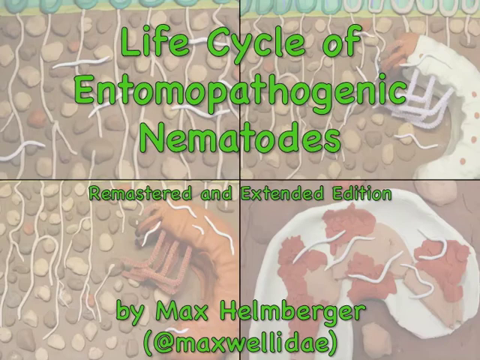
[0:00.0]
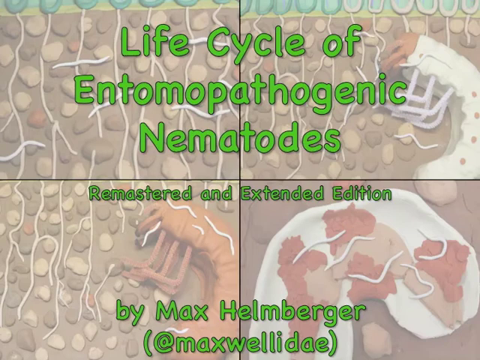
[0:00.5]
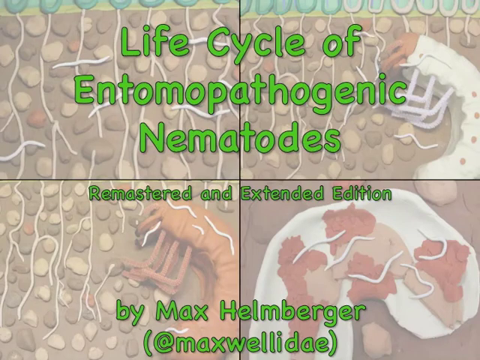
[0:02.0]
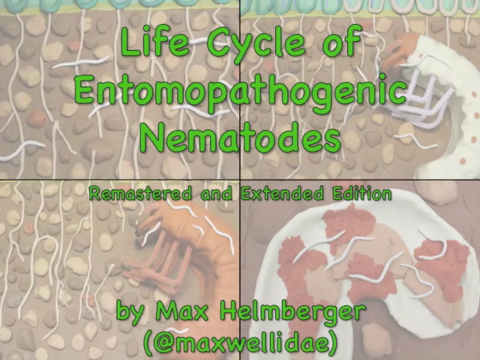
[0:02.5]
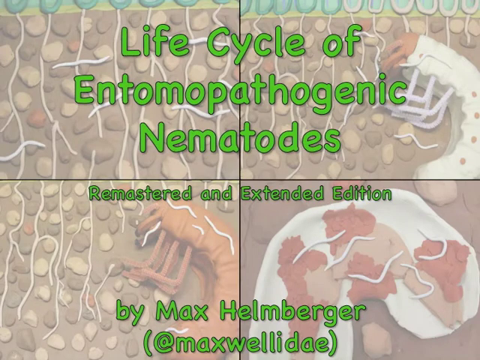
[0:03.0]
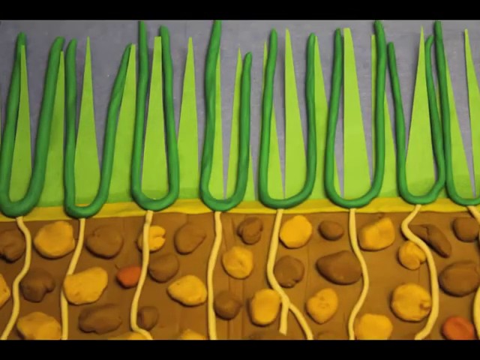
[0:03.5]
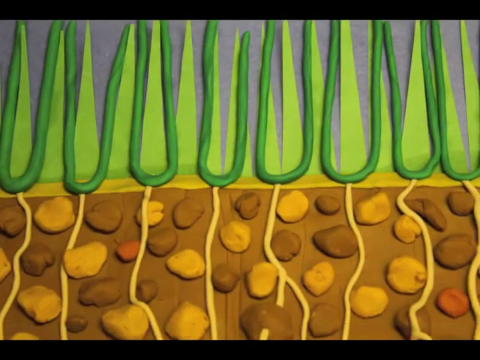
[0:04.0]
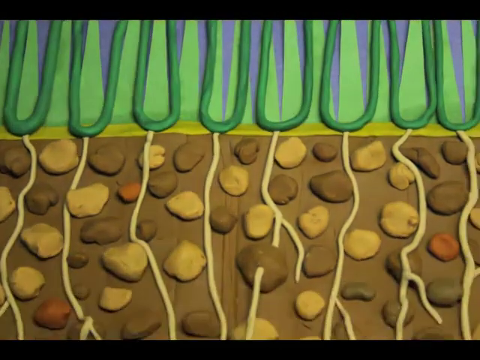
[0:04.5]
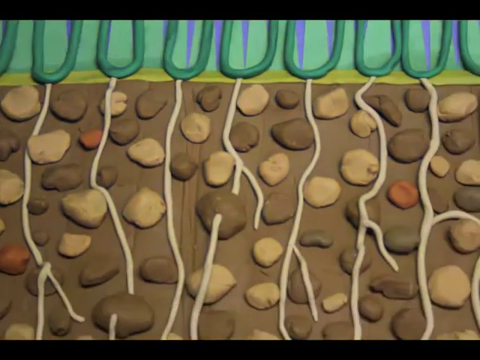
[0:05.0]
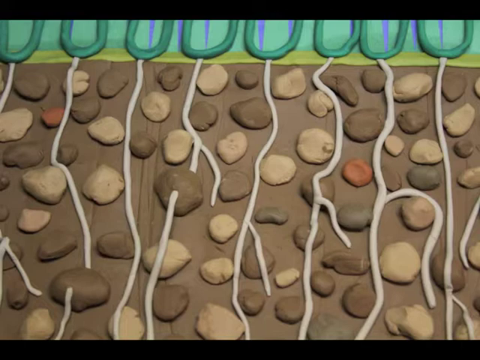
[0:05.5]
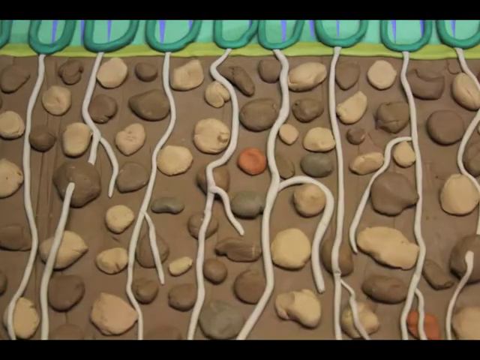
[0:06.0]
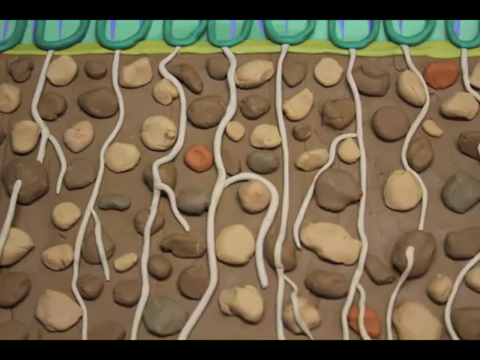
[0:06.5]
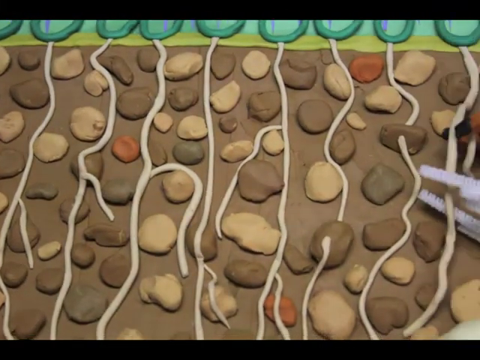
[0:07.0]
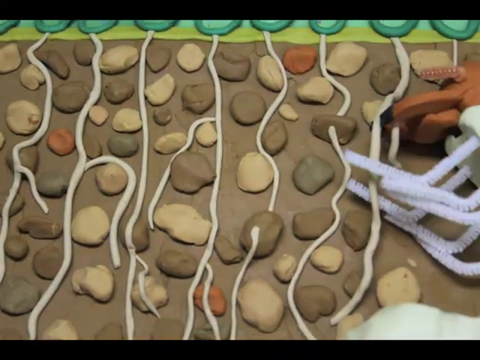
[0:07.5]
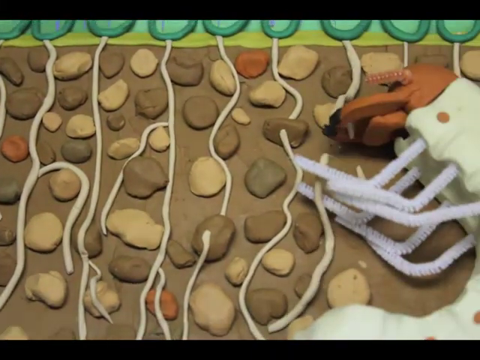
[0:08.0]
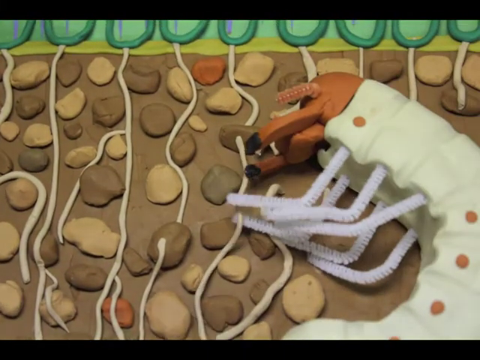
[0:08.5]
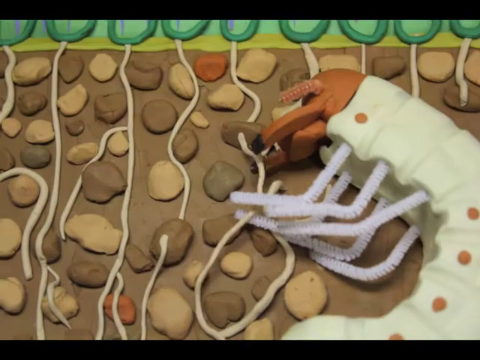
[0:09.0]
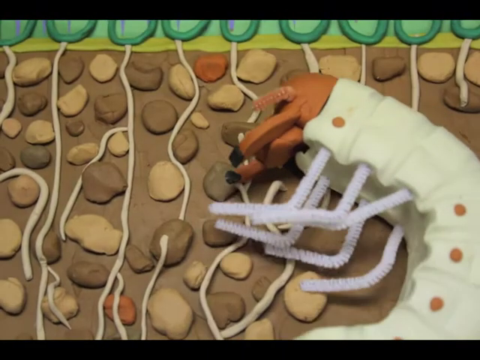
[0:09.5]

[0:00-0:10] Bright green text in the middle of the screen reads "life cycle of entomopathogenic nematodes remastered and extended edition by Max Helmberger". In the background are four drawings, supposedly of nematodes, in four various stages of their life. The video is a clay animation. It begins with what seems to be grass, plants with roots grown into the ground, and soil with various elements in it. The camera then shows a larva in the soil; it is white mixed with orange, and it chews through the roots of the plants.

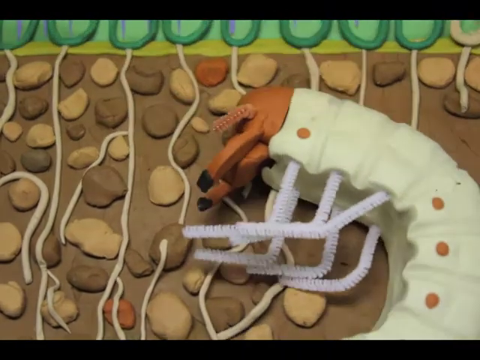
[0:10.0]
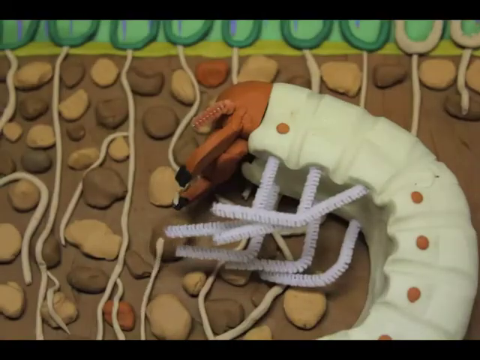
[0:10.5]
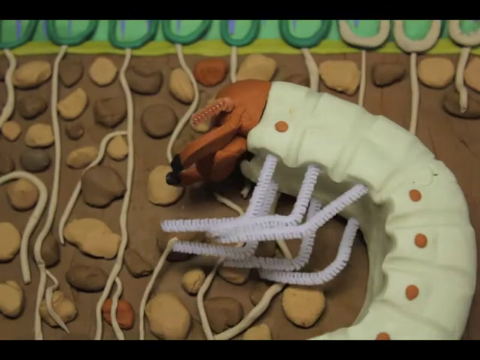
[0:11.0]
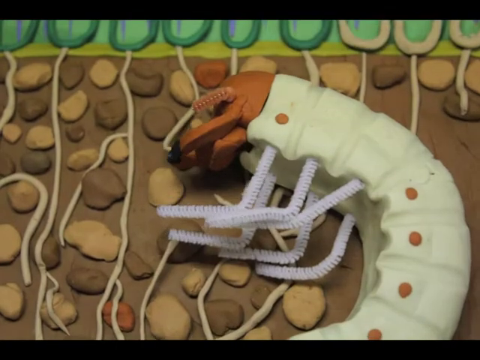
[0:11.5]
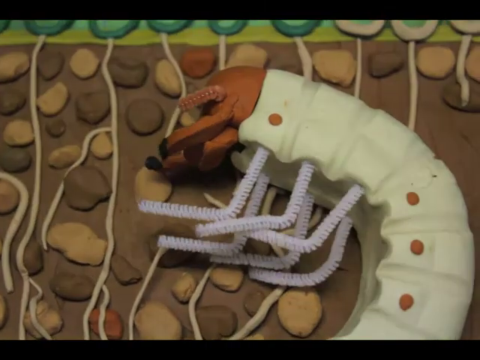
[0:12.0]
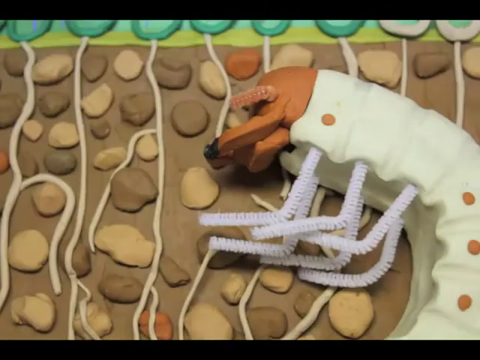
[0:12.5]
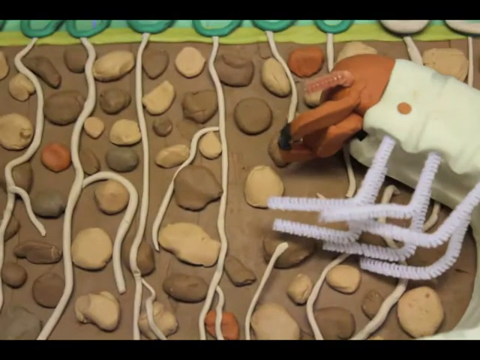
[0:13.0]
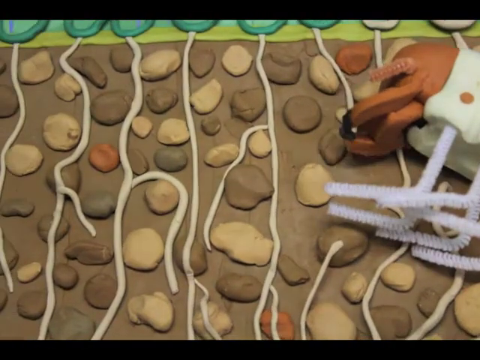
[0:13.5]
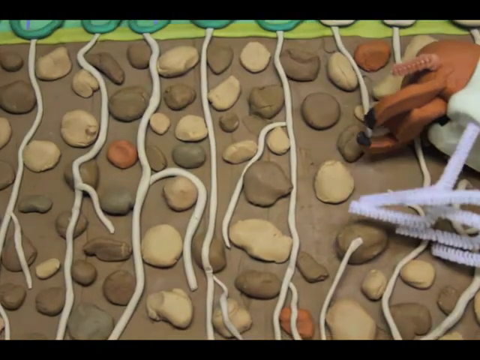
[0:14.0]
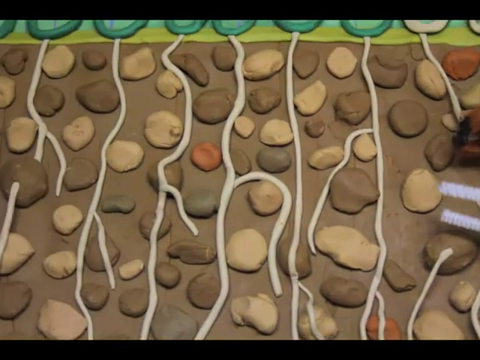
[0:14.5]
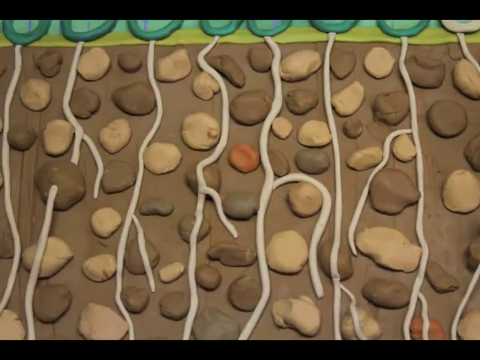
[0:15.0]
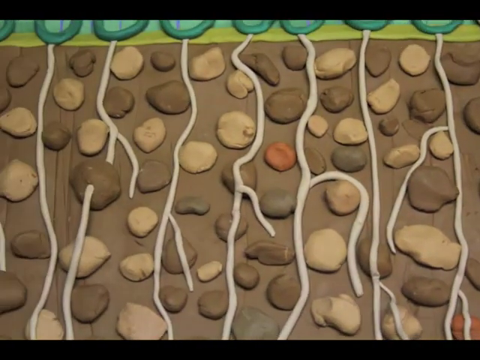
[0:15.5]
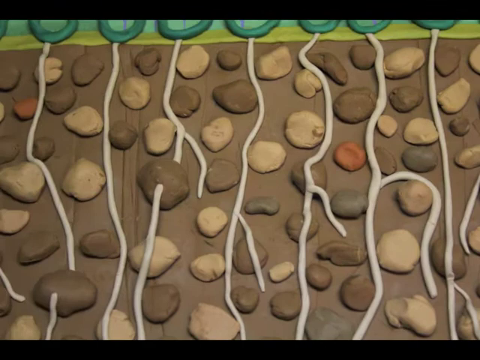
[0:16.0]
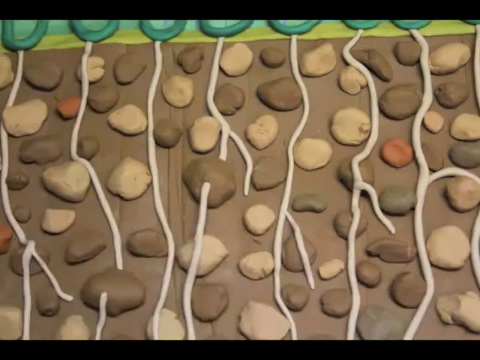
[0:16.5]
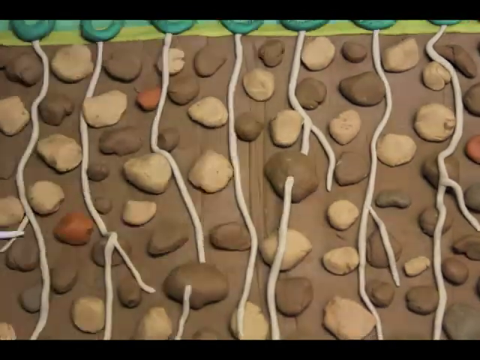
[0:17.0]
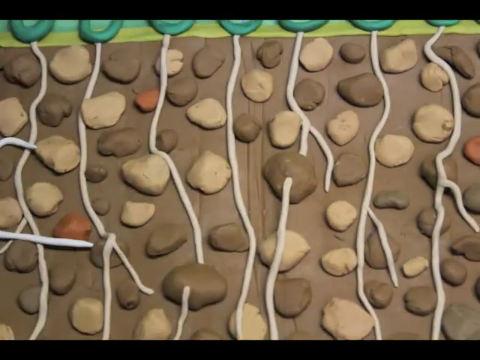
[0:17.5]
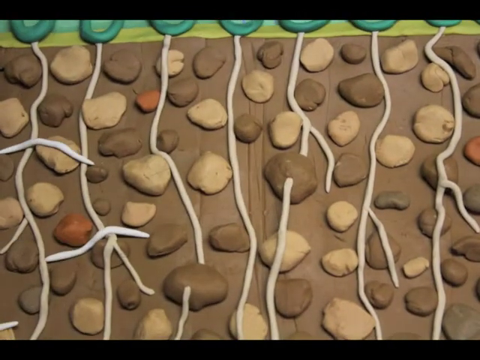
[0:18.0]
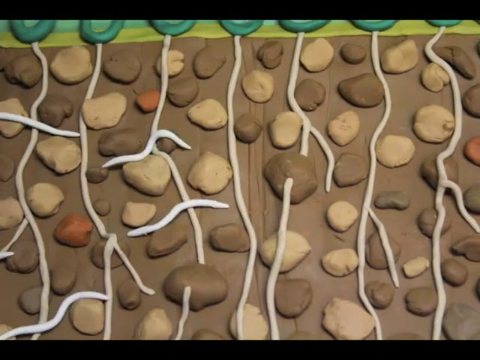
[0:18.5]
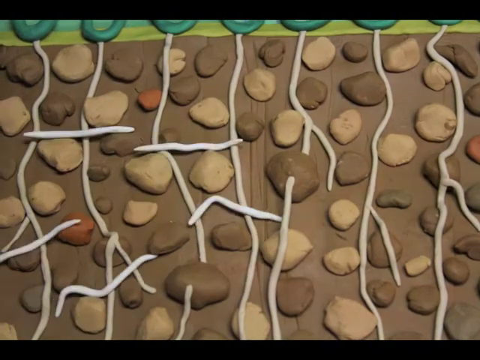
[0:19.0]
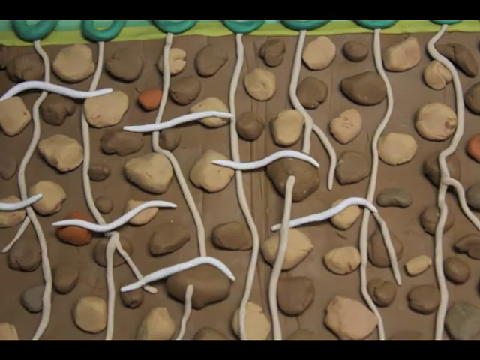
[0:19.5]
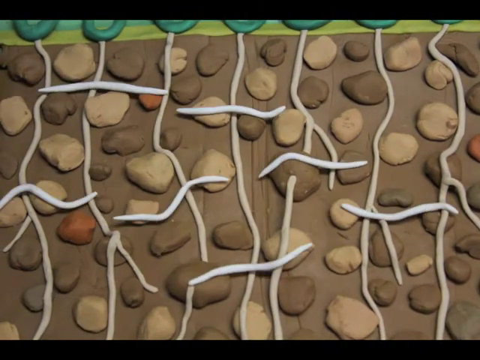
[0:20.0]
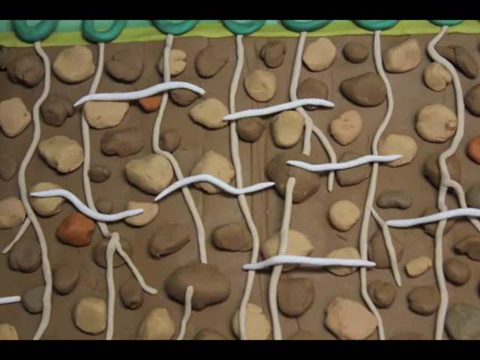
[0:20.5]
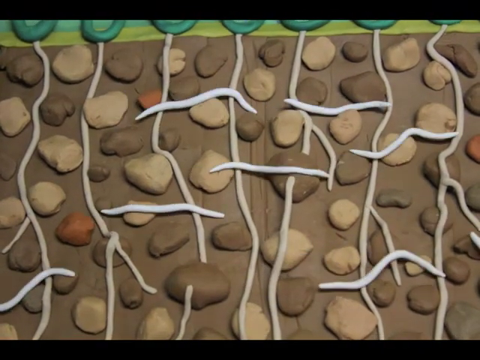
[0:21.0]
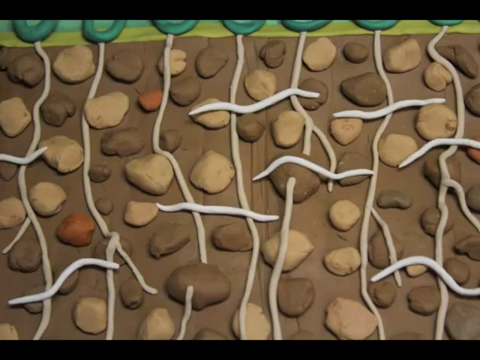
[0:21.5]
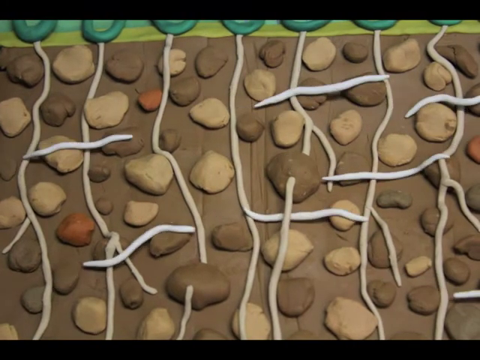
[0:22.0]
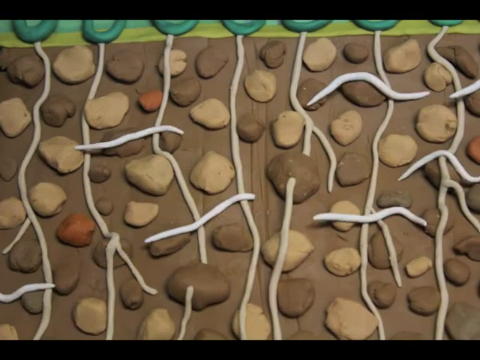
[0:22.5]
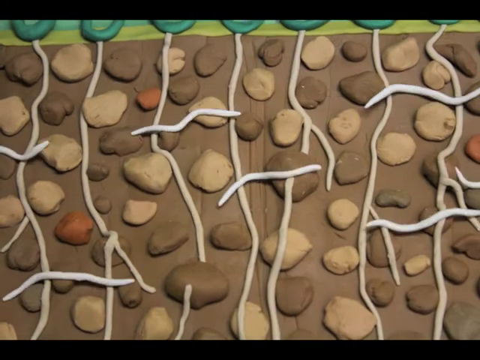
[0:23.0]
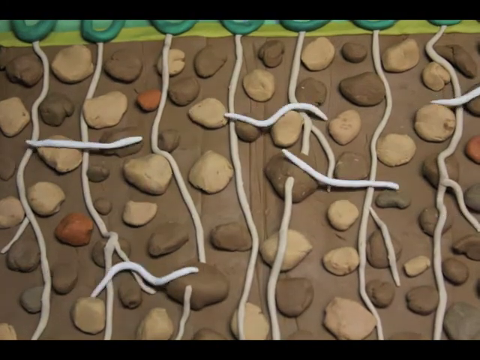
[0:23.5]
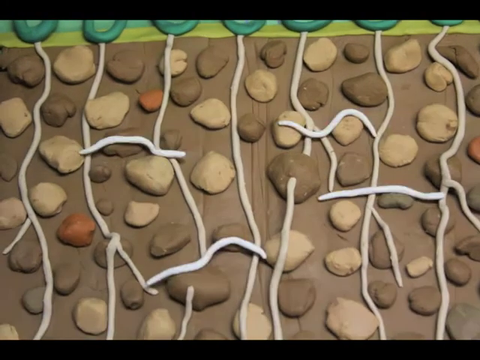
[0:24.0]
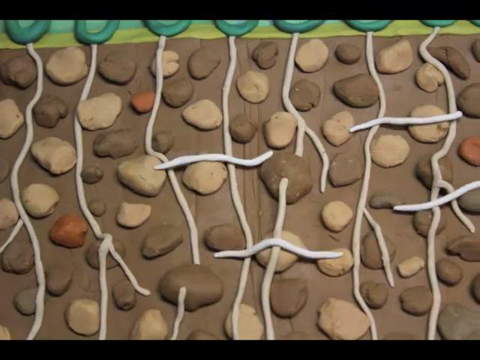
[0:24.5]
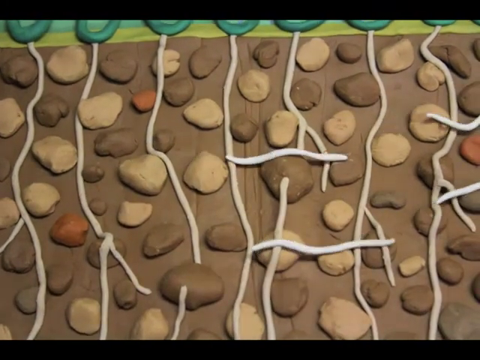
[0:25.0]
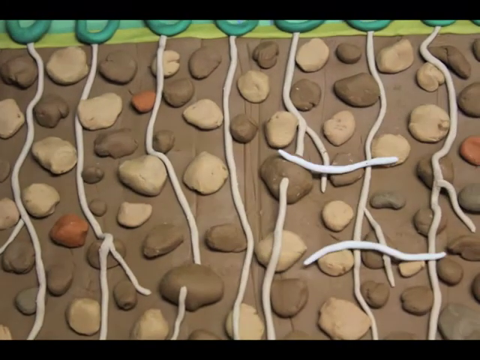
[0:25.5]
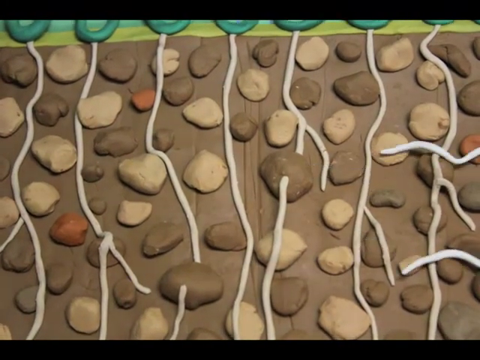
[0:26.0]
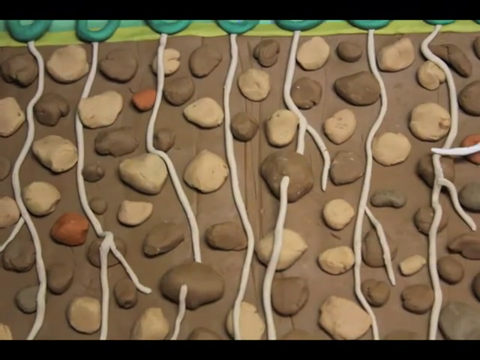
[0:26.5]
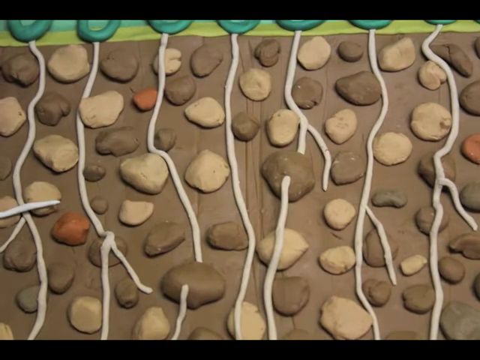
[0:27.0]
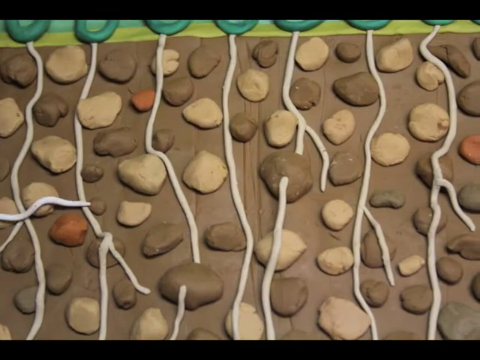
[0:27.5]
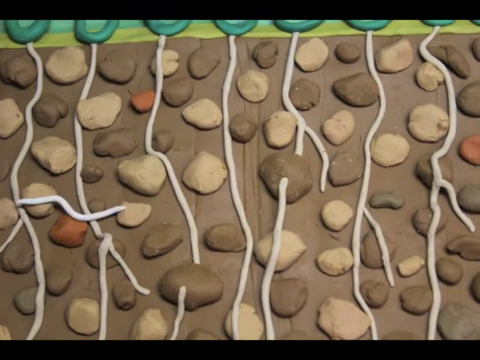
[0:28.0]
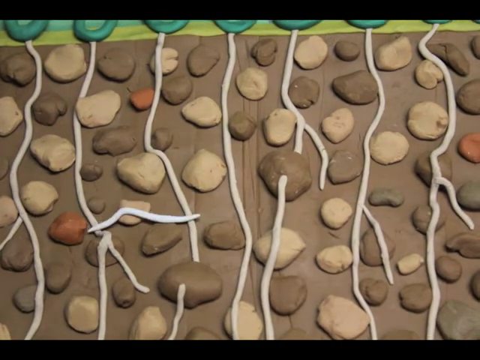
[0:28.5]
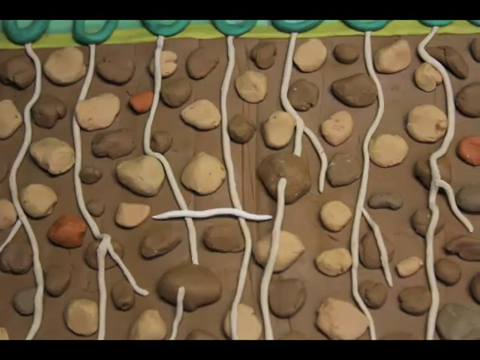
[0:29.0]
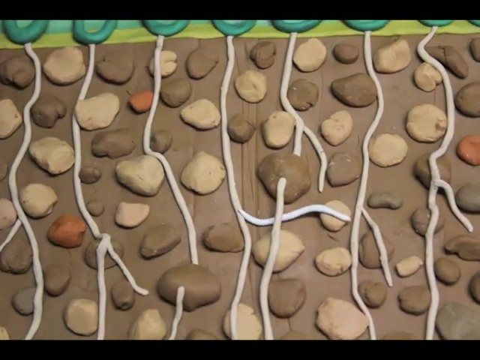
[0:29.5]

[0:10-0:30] The entomopathogenic nematode, a mix of white and orange, chews through the roots of the clay plants. In the background is soil made of clay with plants growing out of it. Some sort of worms or larvae made of white clay come through the soil; about 10 or 15 of them move across the screen from left to right toward the nematode. The soil is built from light and dark brown, beige and orange clay, the part above the soil is a mix of light green and dark green, and the plants' roots are made of white clay. While most of the characters and background are clay, the nematode's legs and parts of its head are made of arts and crafts pipe cleaners.